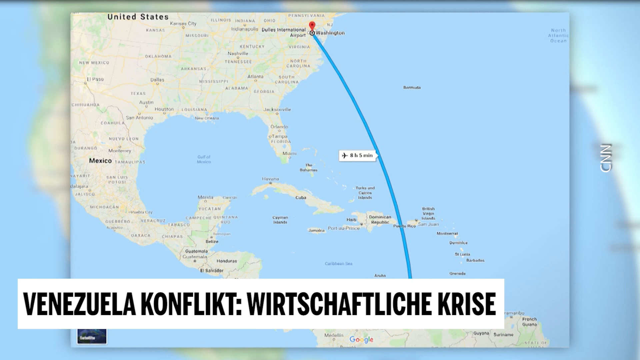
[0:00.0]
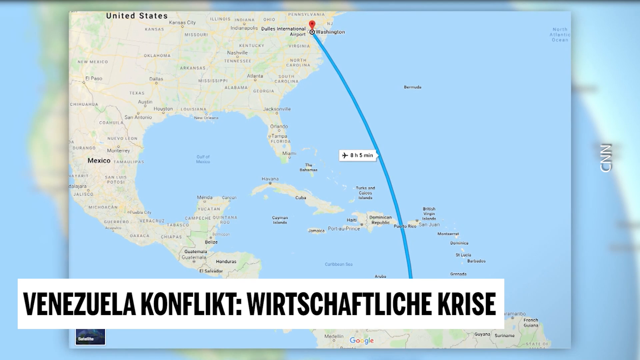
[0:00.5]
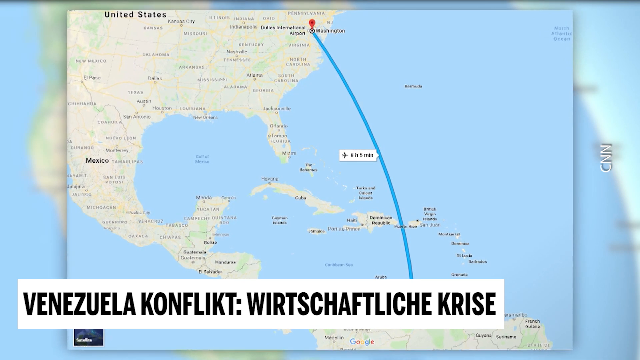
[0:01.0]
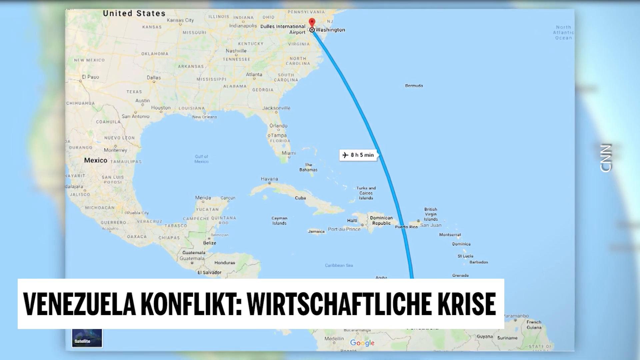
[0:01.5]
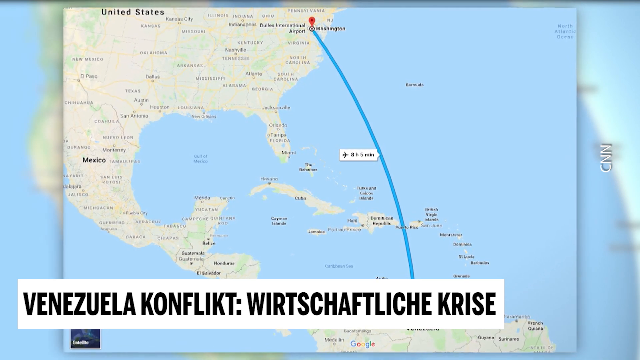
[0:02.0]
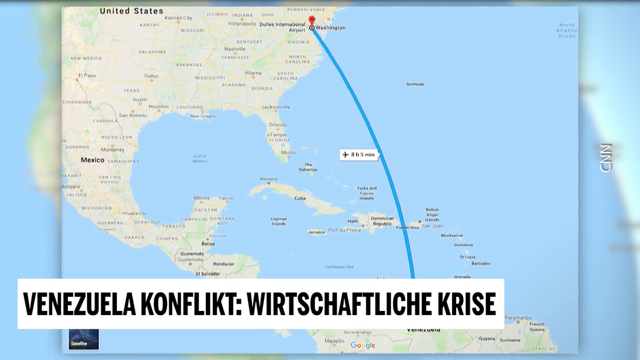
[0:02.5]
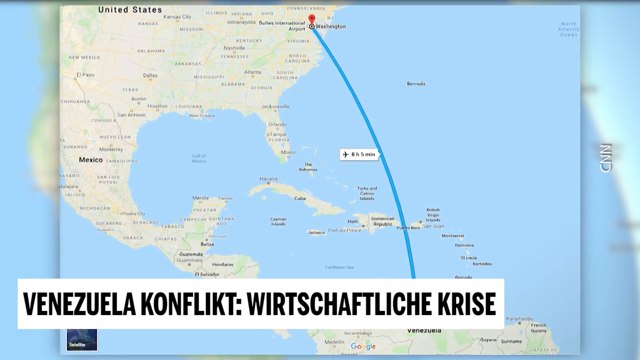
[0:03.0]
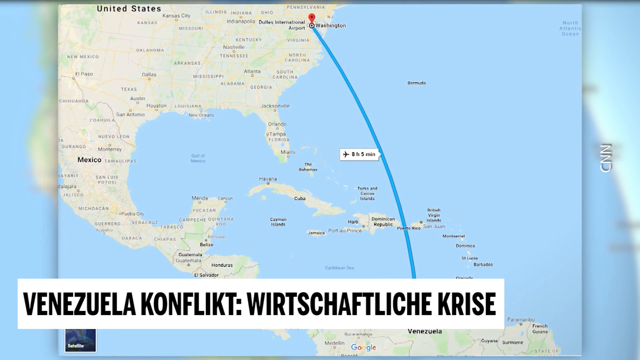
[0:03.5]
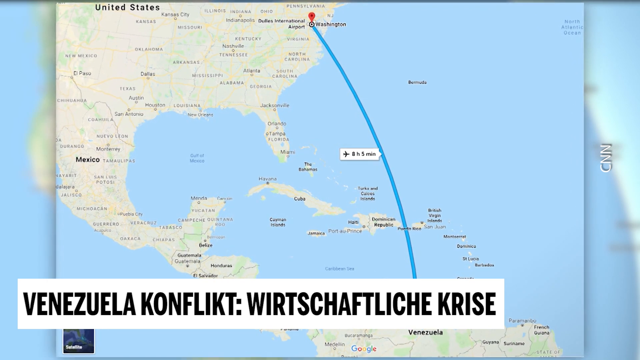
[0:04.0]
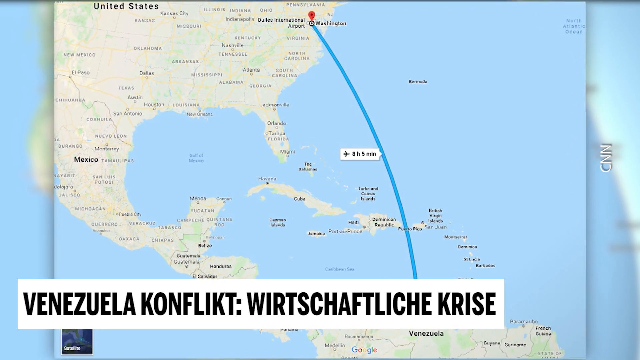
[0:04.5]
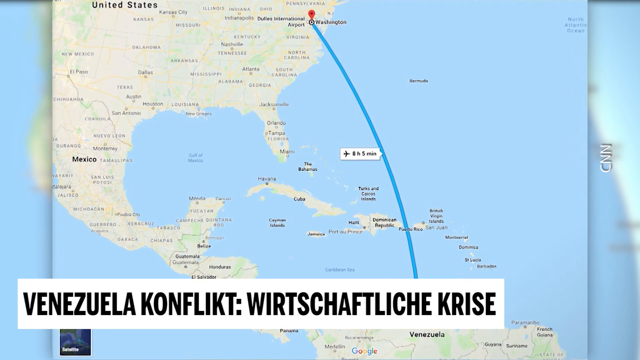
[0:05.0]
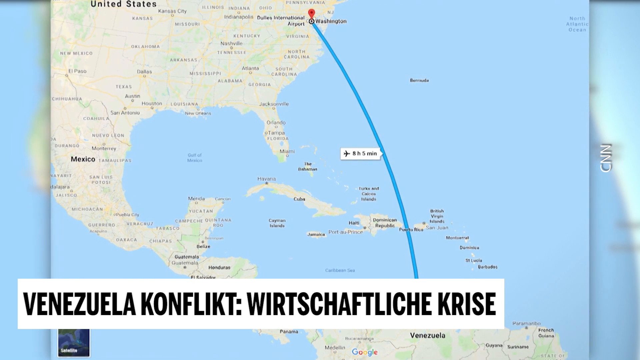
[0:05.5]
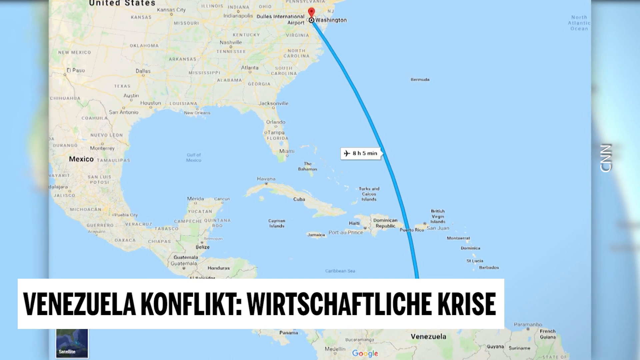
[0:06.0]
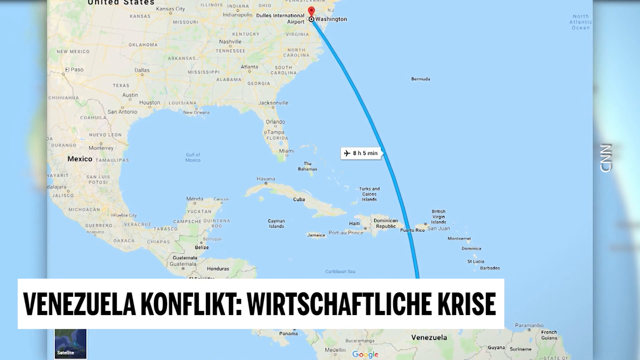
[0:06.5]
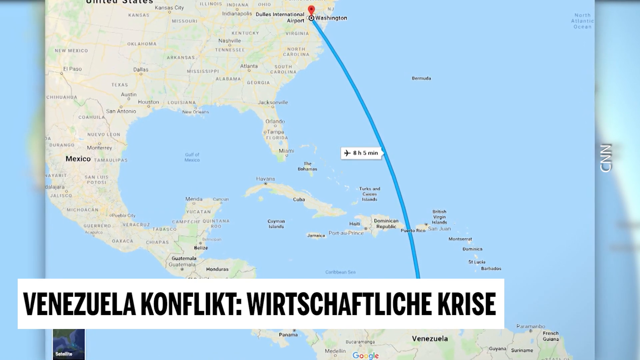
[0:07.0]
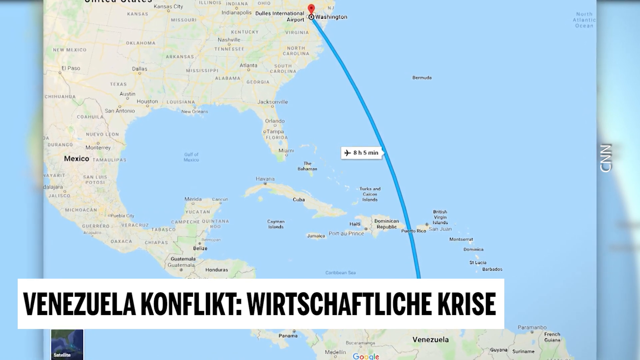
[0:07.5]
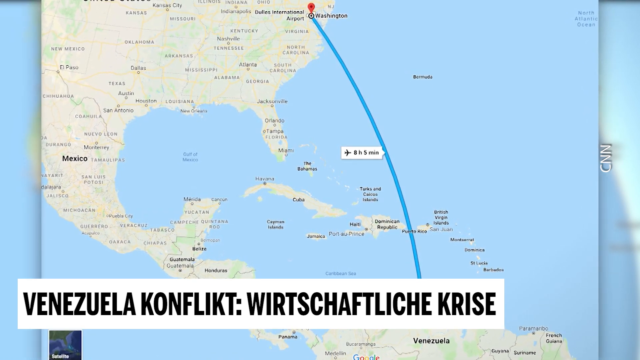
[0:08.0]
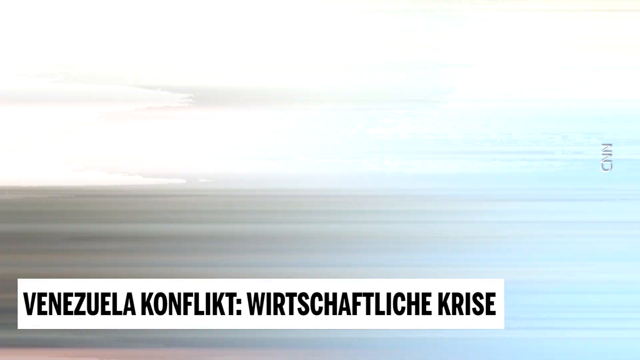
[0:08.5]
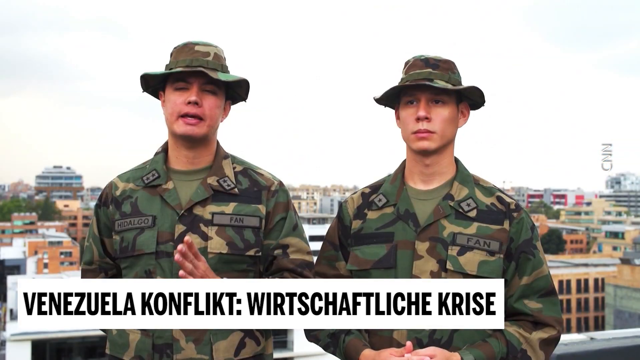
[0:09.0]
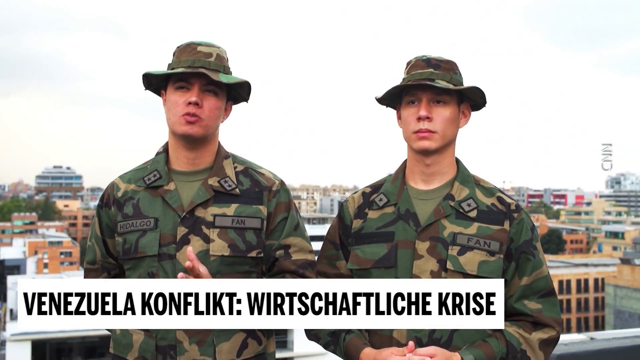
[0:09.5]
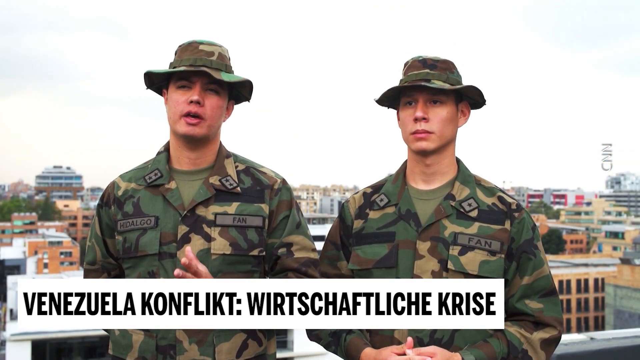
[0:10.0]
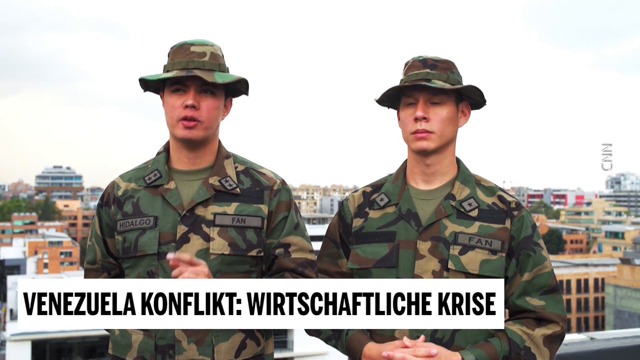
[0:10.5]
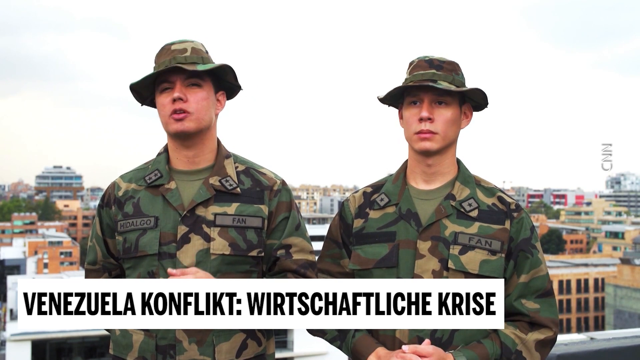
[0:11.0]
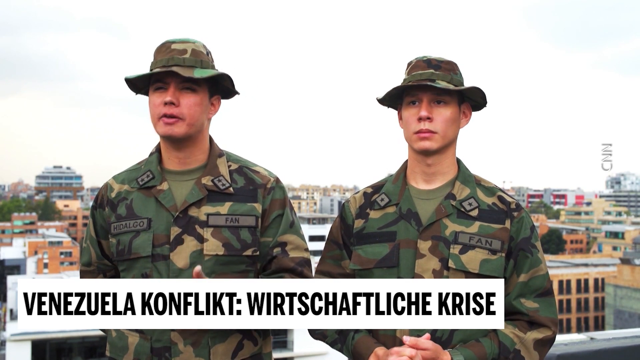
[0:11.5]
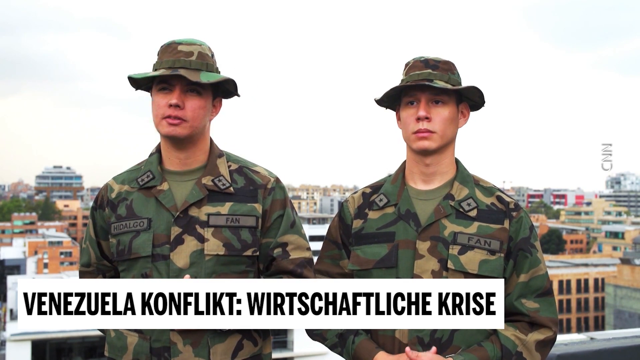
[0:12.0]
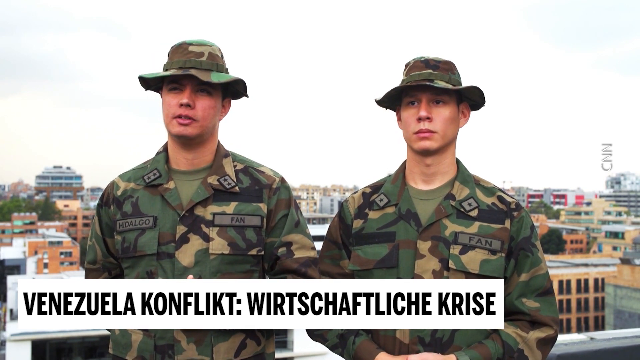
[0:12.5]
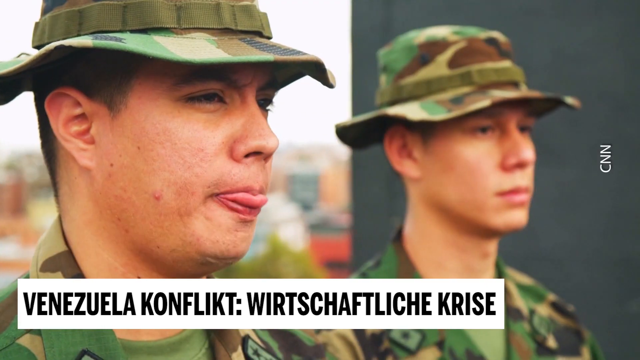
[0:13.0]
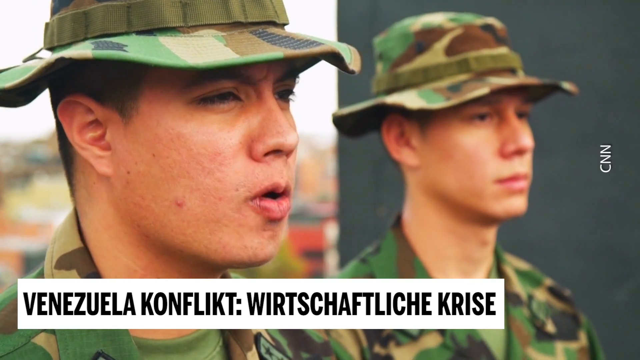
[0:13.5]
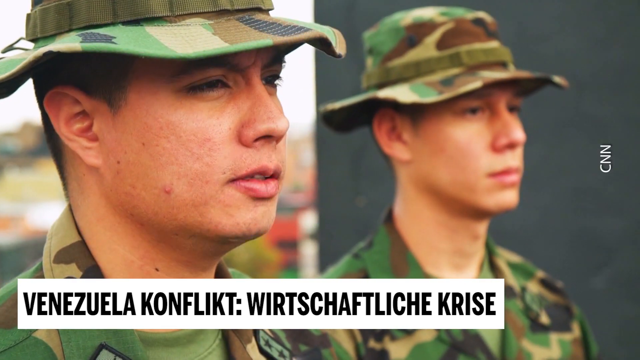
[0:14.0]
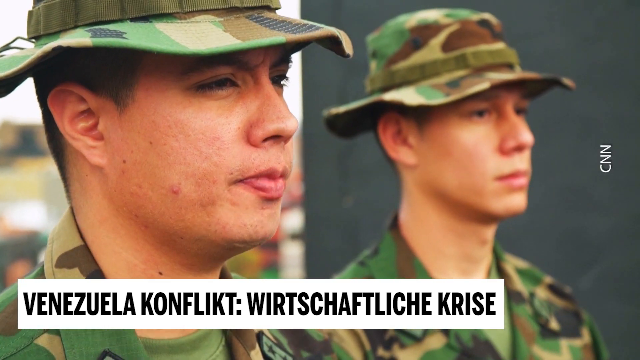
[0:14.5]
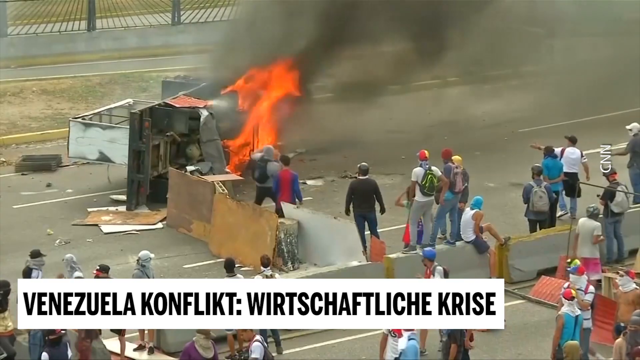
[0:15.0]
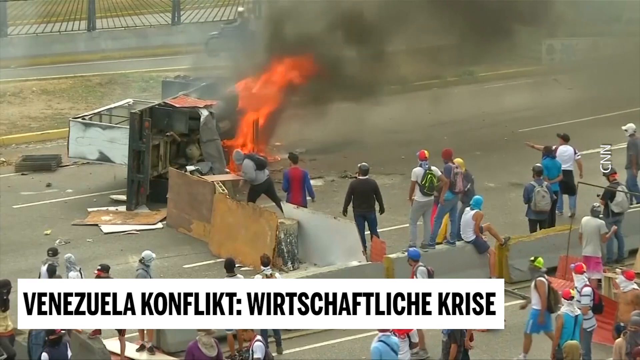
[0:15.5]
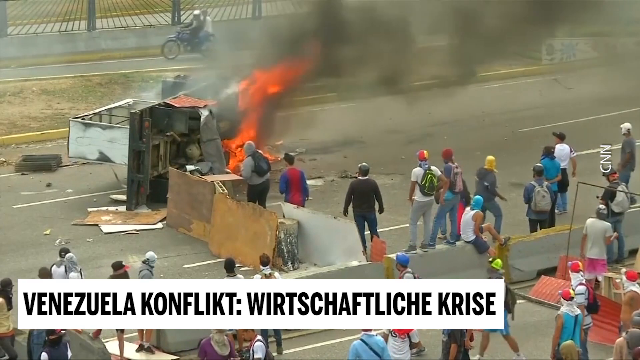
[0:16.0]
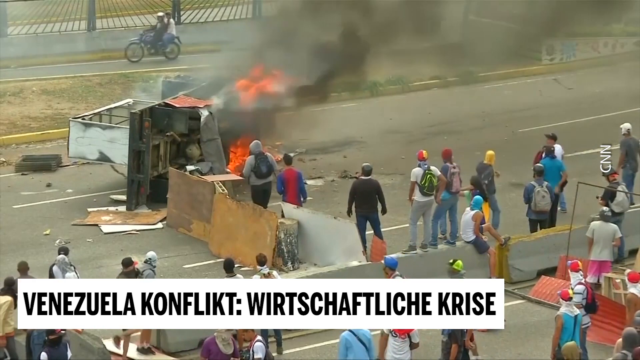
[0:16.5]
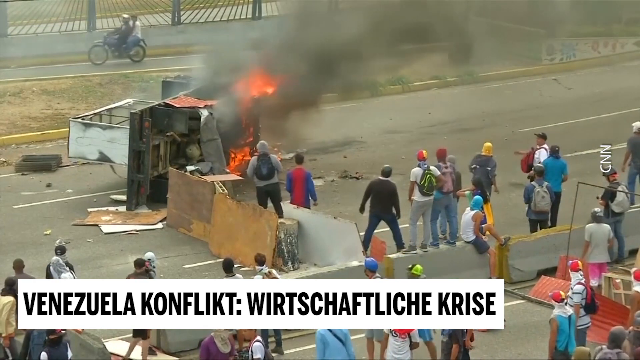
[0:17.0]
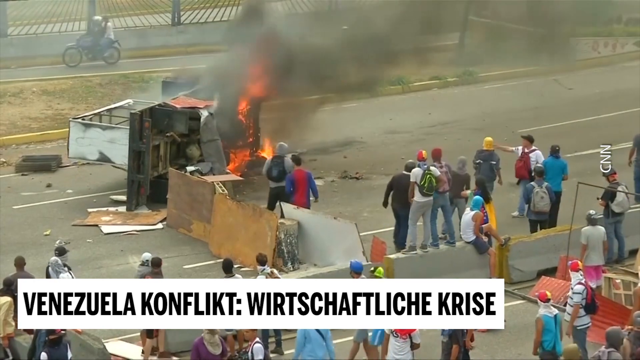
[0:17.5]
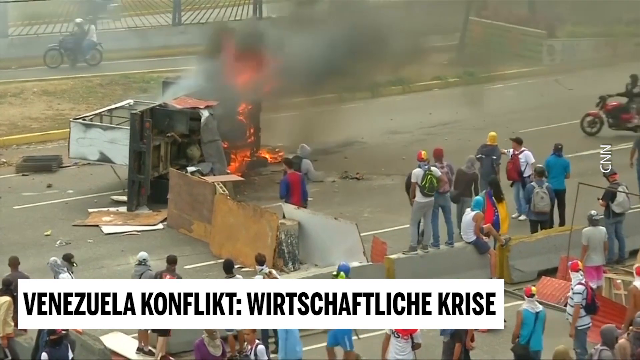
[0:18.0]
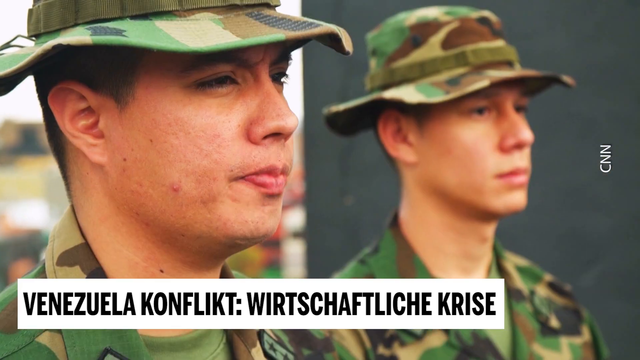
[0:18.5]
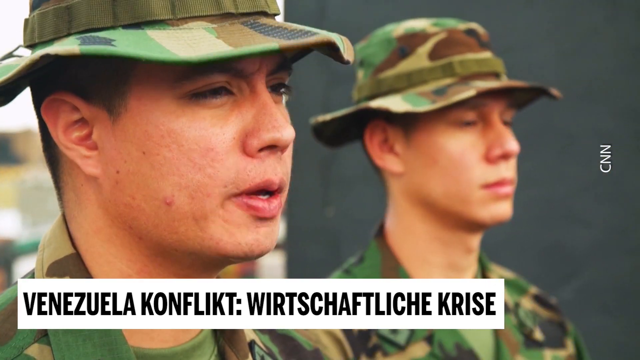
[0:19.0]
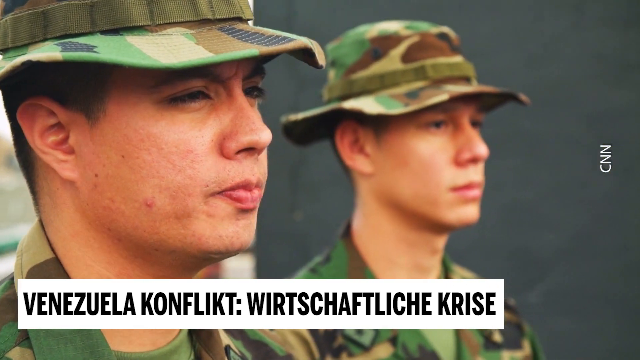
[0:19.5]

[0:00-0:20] A map of North America and the continent of South America appears, apparently showing a route from Washington, D.C. to another area. The text on the screen is in Hebrew, and the words "Venezuela conflict" are written. The scene switches to two soldiers in camouflaged clothes who are speaking. The view then changes to a side view of the young man looking at another camera. Next, a group of people stand by the roadside with a truck burning in a huge fire, and the people throw objects toward the cameras. On the other side of the lane are a motorbike and a person. The video possibly switches back to the soldiers speaking.